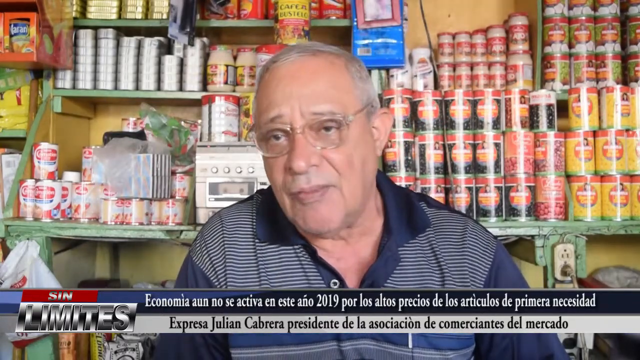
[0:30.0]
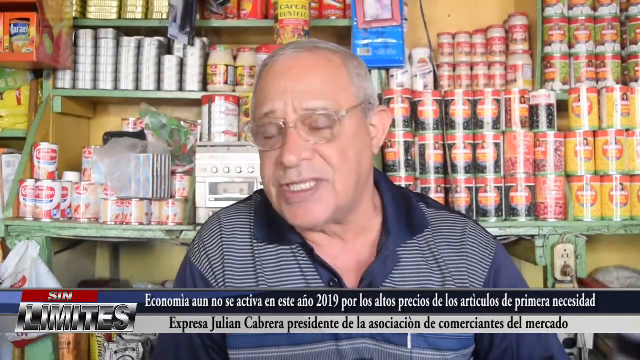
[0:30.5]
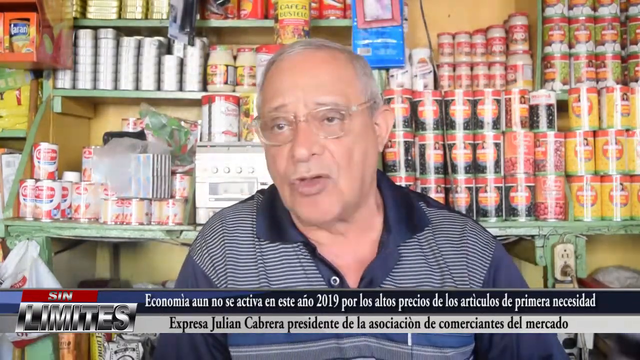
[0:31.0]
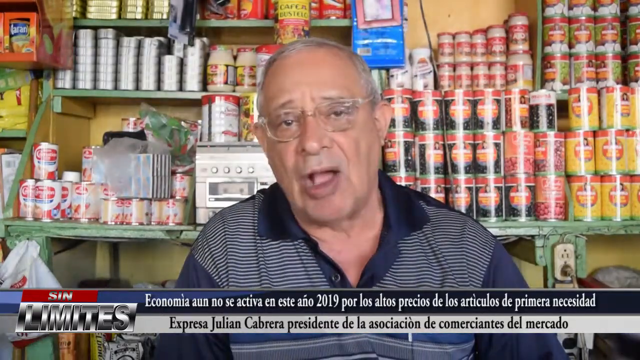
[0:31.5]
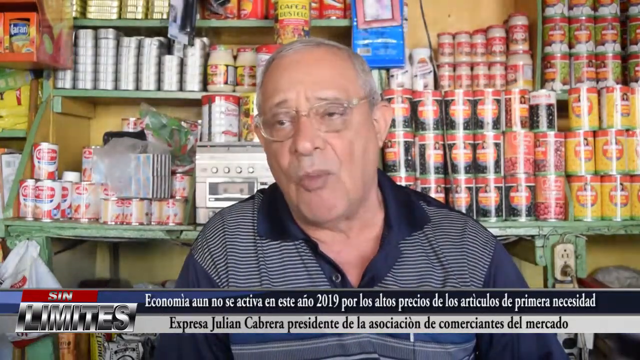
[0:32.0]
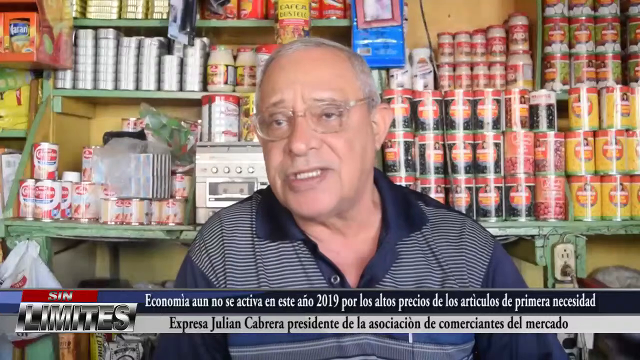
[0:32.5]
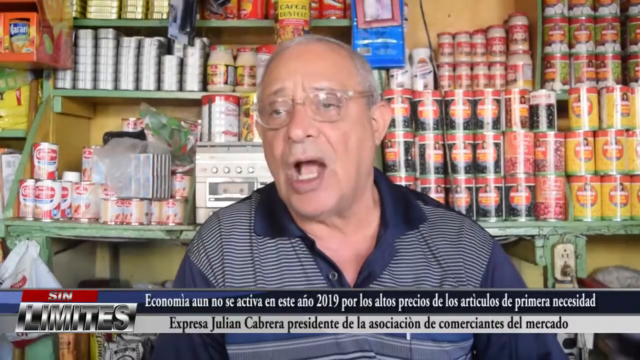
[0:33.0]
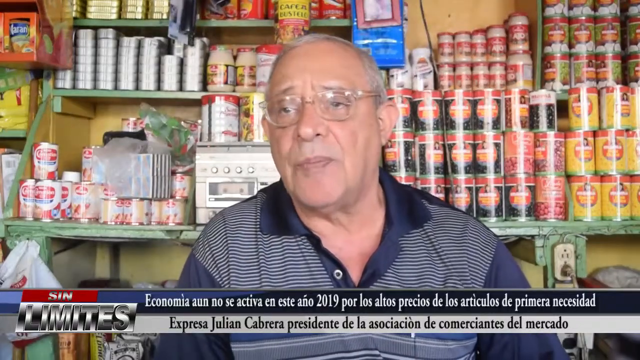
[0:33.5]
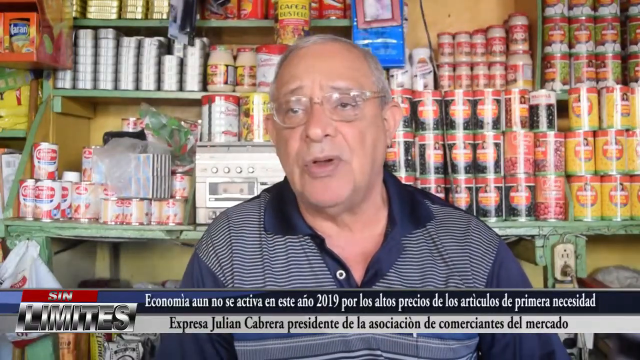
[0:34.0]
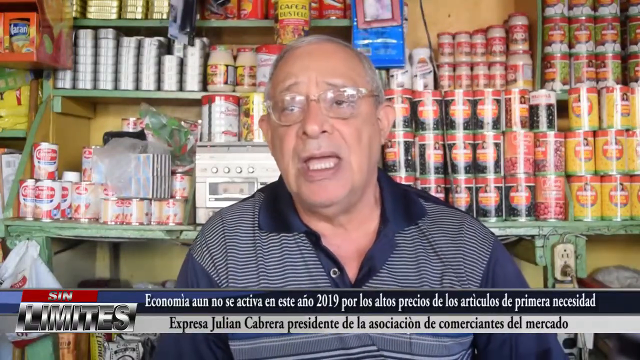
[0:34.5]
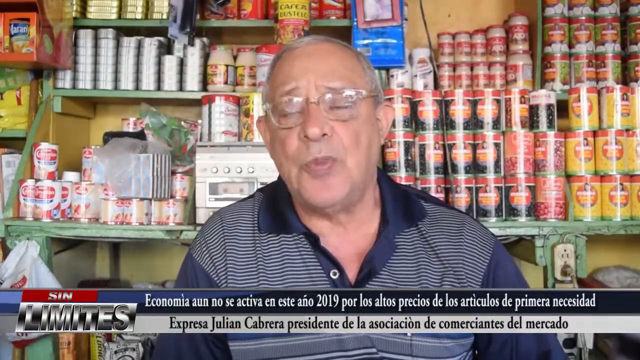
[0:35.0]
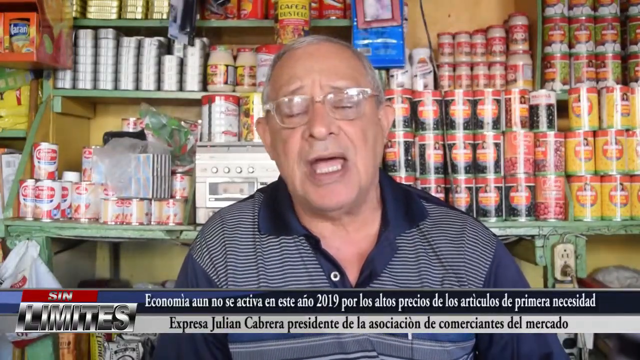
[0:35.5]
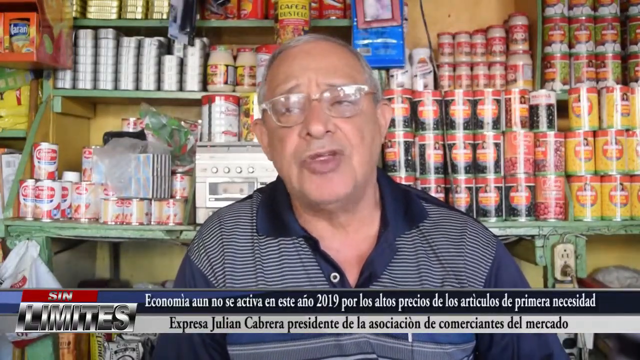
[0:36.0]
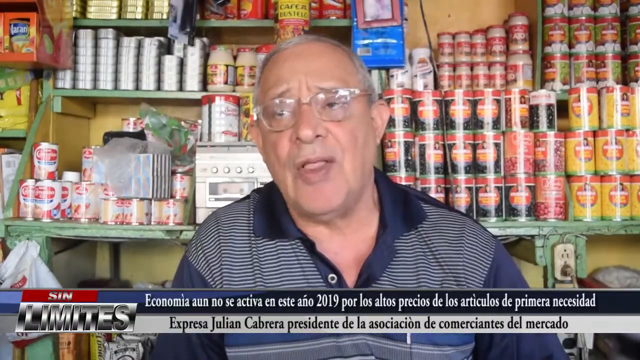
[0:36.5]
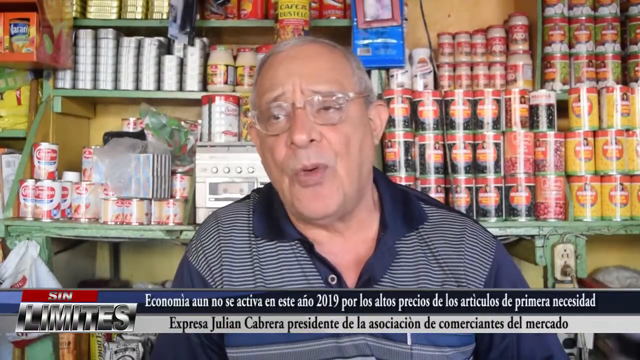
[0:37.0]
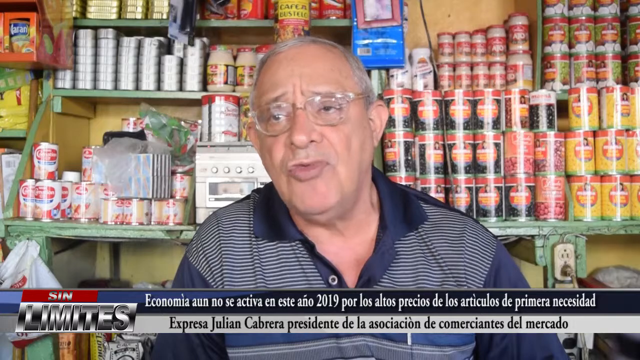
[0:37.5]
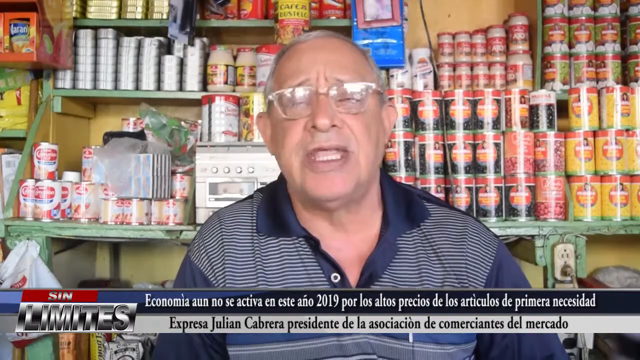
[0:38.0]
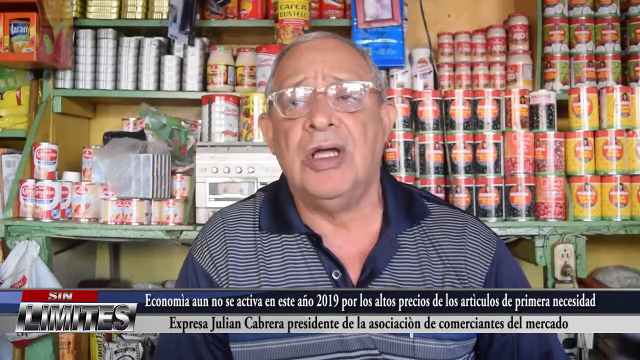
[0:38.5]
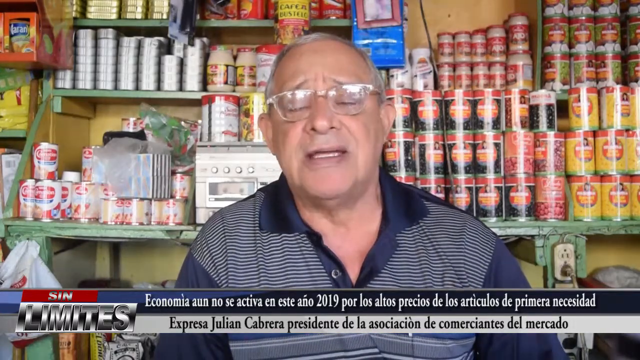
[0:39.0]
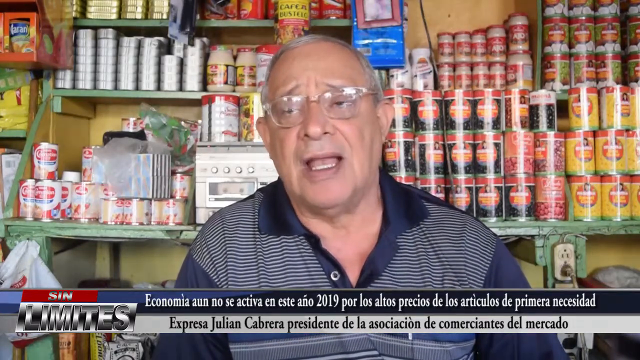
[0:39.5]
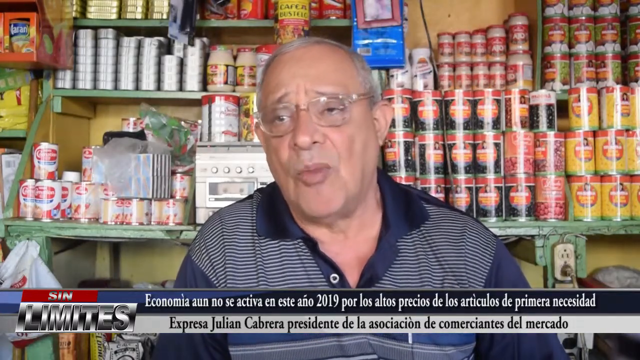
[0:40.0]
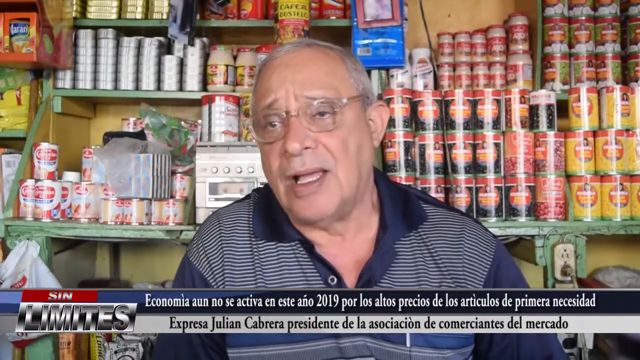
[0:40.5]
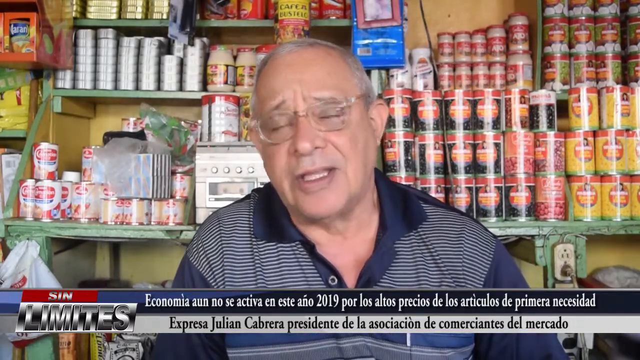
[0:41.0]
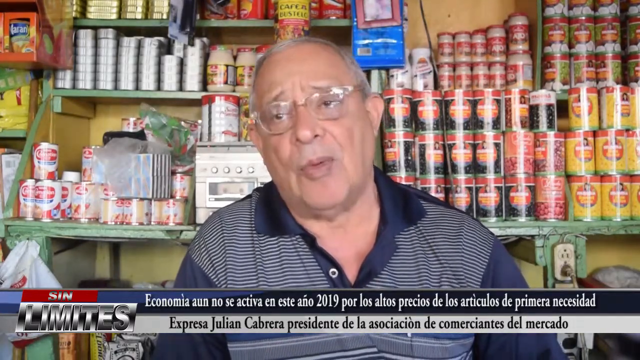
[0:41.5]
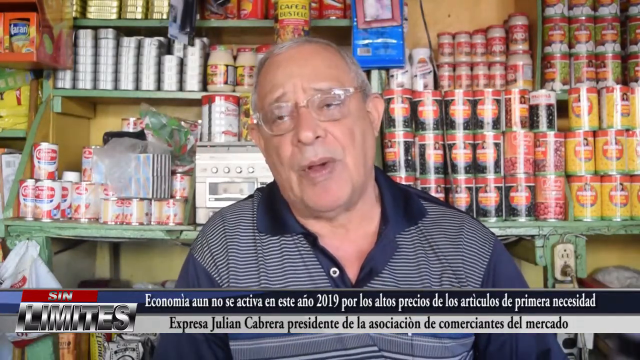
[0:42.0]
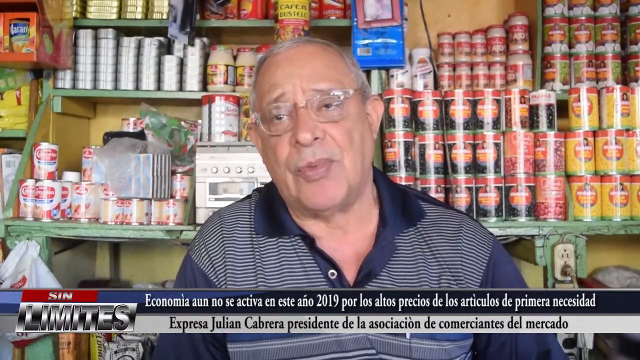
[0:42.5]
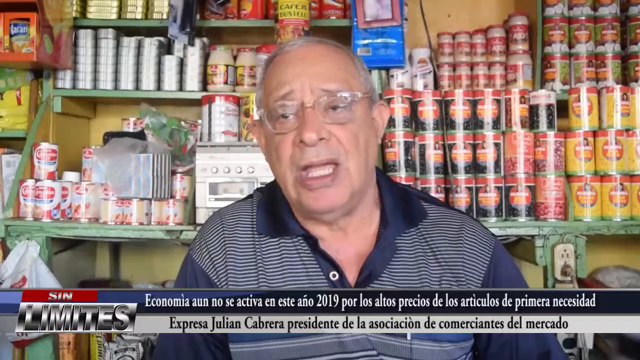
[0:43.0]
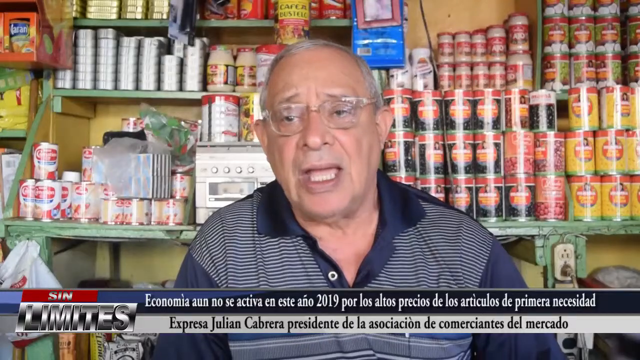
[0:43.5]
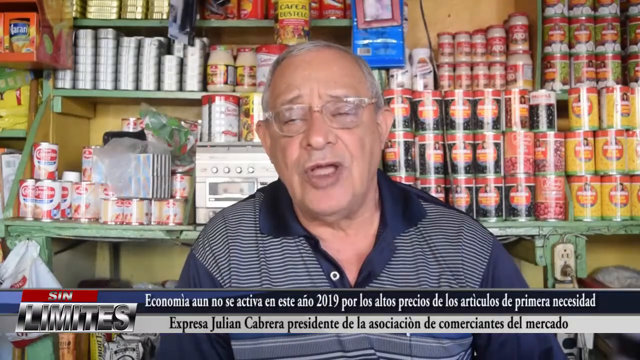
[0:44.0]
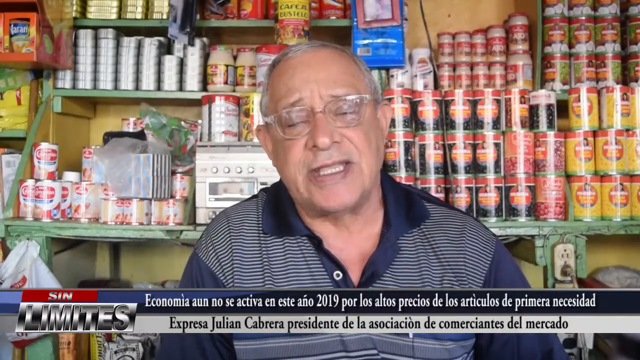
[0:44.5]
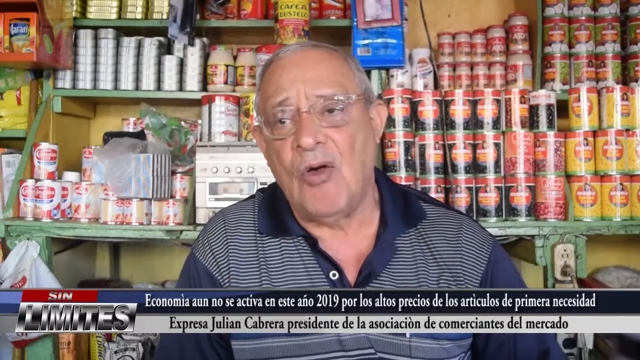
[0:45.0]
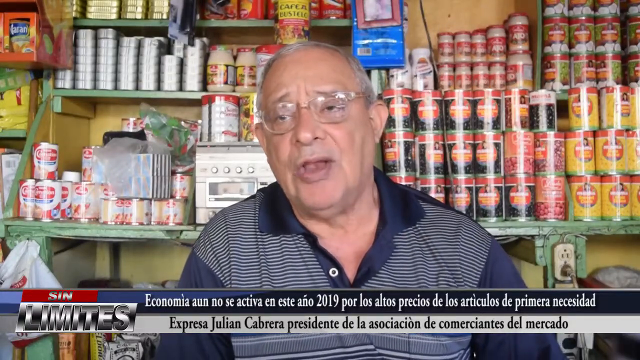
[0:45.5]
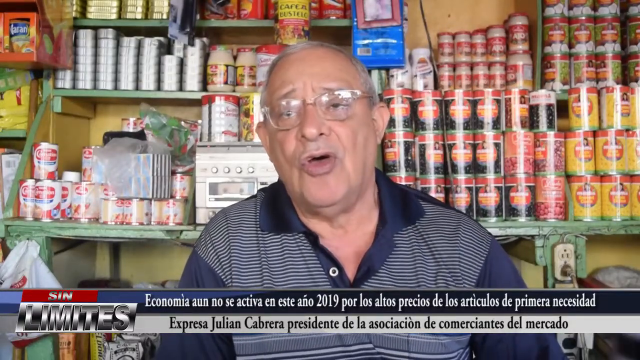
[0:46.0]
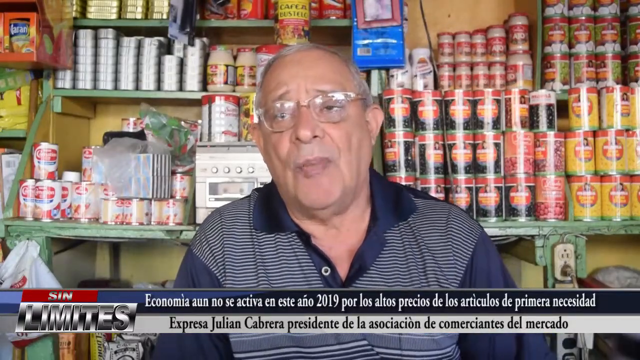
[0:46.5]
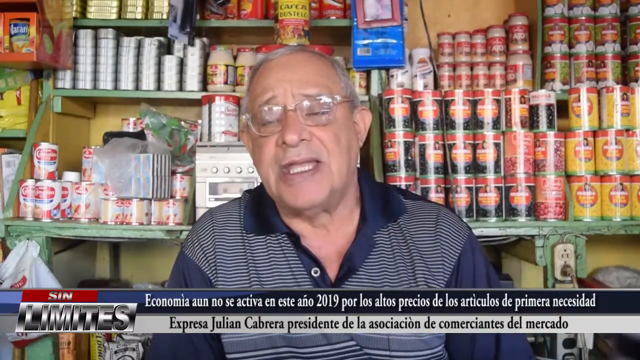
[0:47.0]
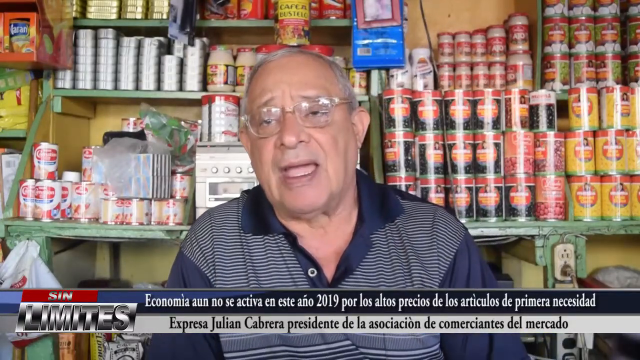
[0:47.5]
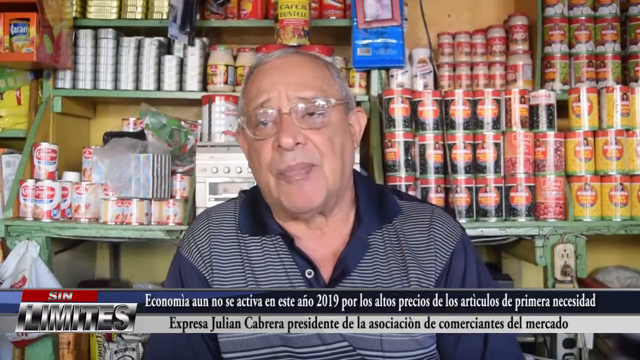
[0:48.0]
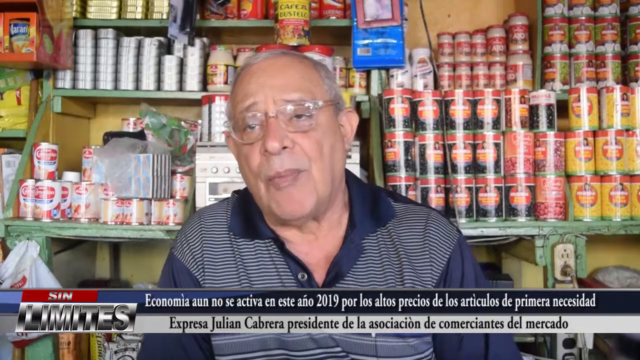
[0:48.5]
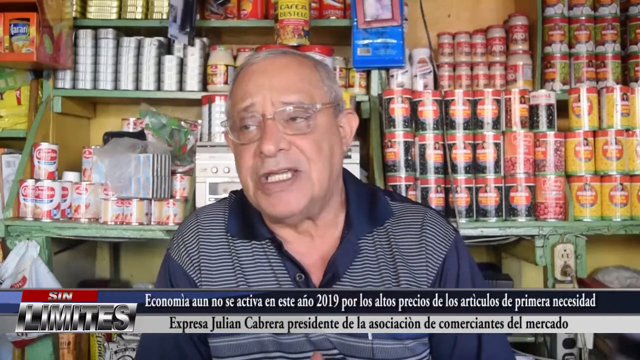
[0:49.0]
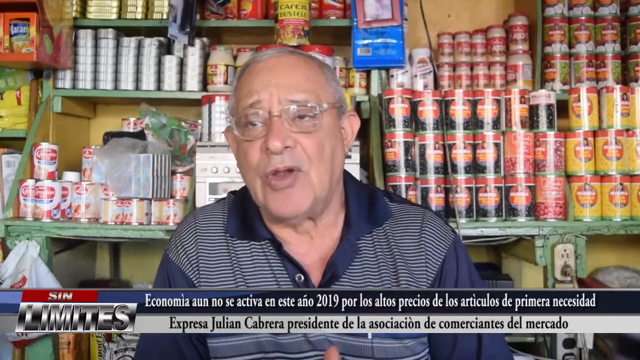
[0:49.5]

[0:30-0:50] A man is interviewed in a store-like area with many canned goods behind him: beans and corn, maybe some sardines, some gray cans and various other food items, as well as cans of food in white and red. A caption at the bottom relates to the economy or economics in some way, though it cannot be fully read. The man is Caucasian, wears wire-rimmed glasses and has thinning gray hair and full pinkish lips. He wears a button-down shirt with gray and blue stripes on the main part and navy blue collar and sleeves.